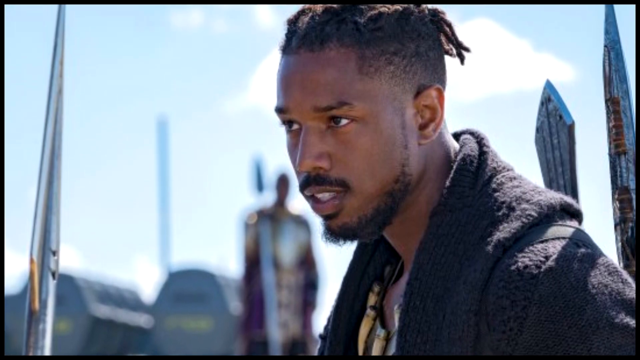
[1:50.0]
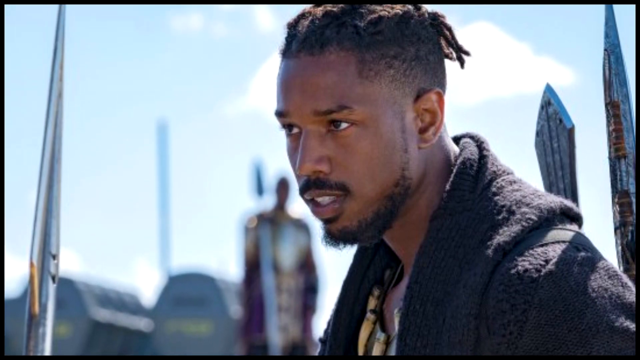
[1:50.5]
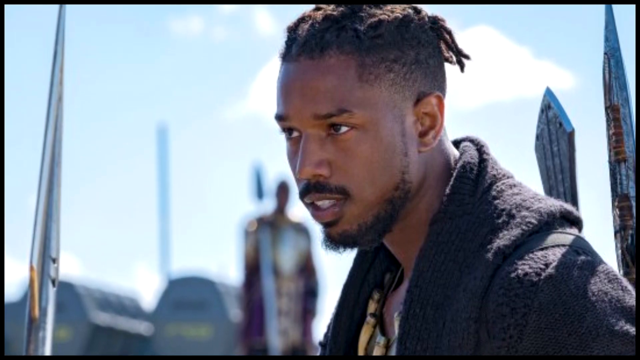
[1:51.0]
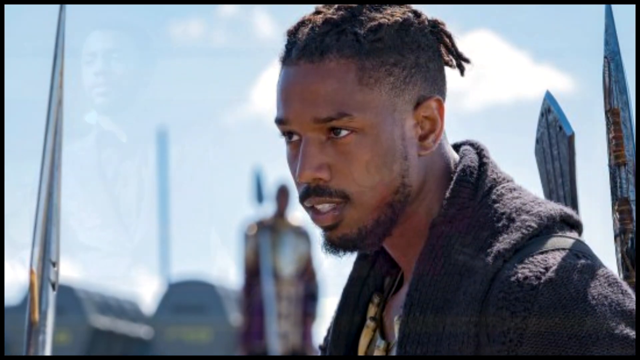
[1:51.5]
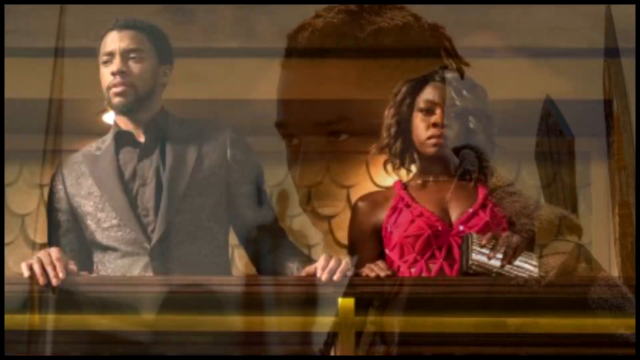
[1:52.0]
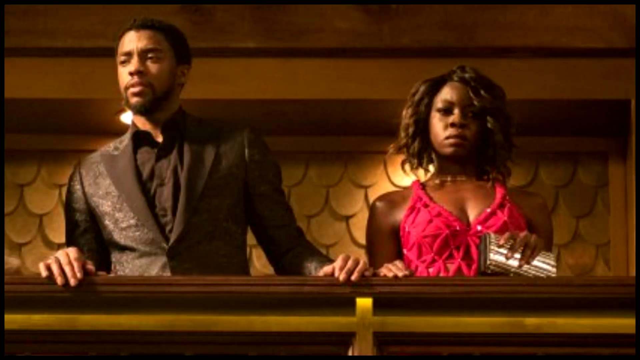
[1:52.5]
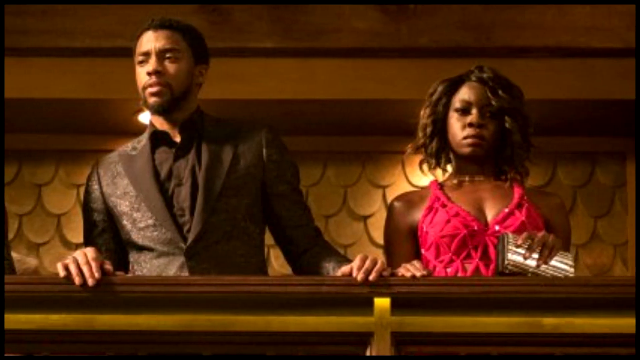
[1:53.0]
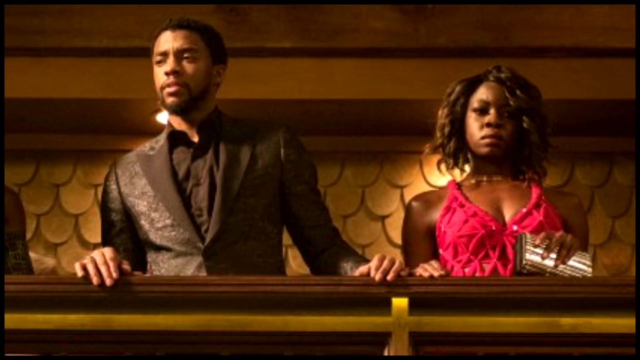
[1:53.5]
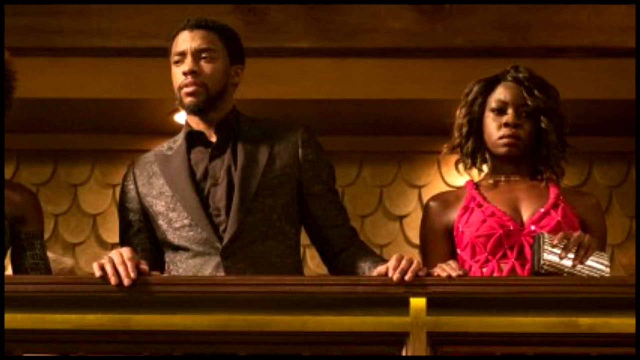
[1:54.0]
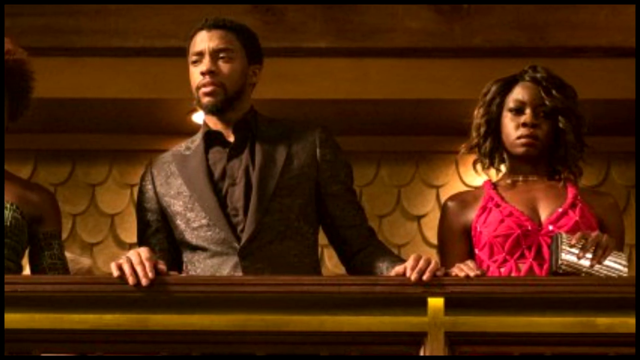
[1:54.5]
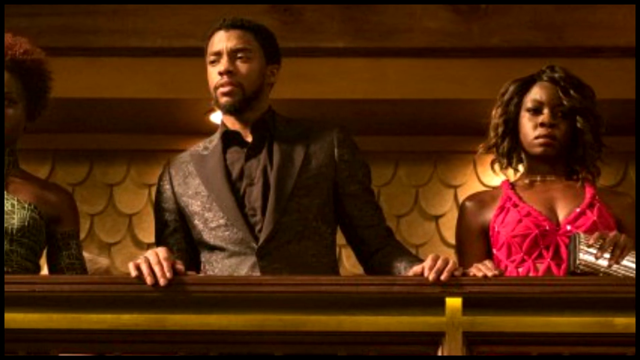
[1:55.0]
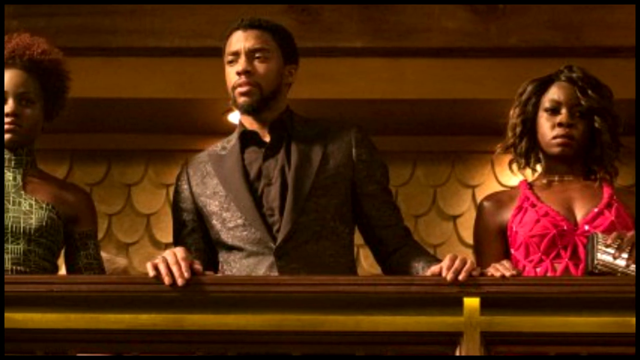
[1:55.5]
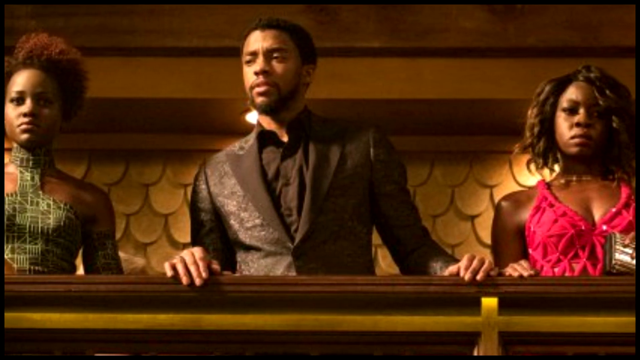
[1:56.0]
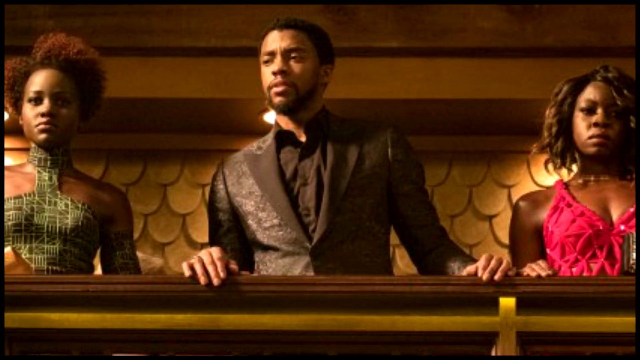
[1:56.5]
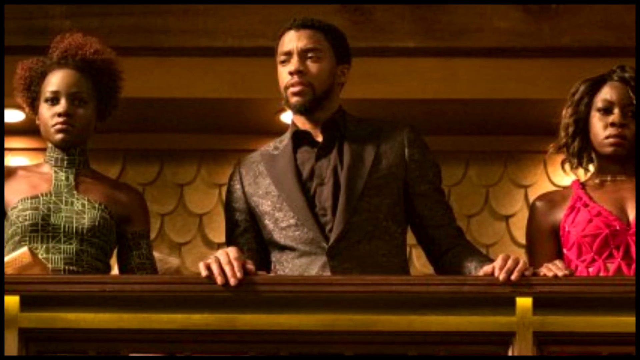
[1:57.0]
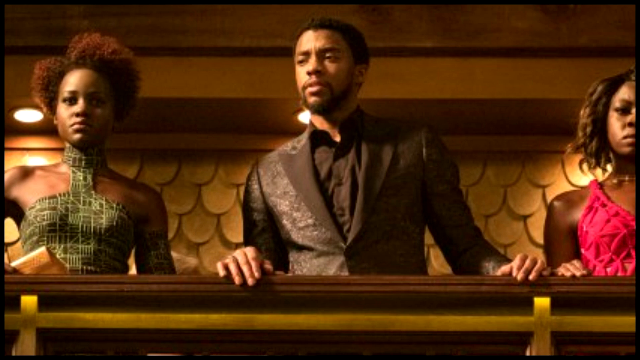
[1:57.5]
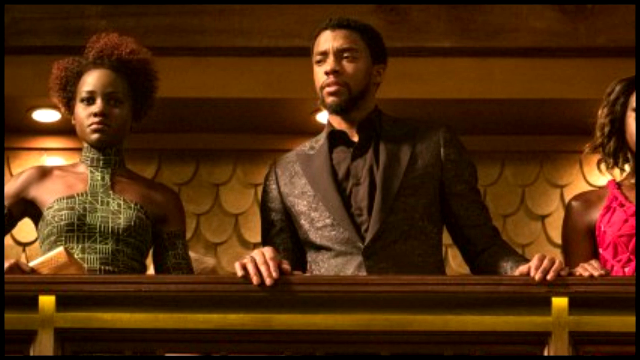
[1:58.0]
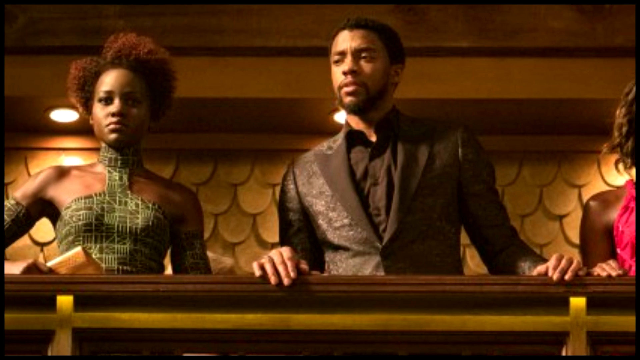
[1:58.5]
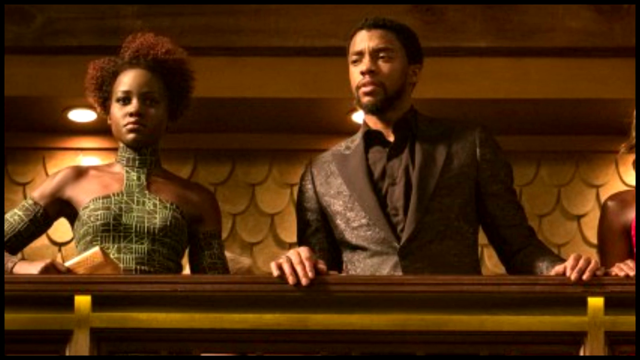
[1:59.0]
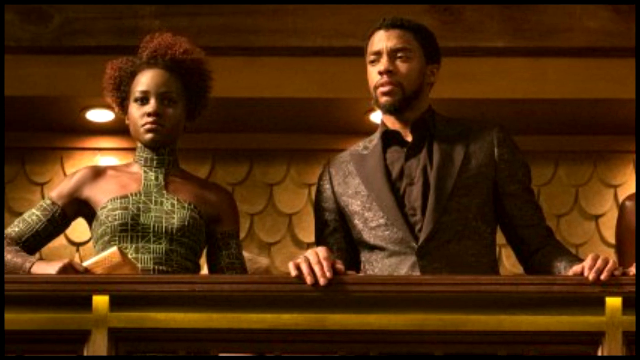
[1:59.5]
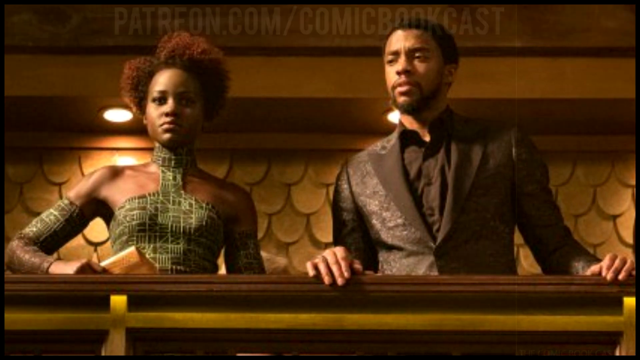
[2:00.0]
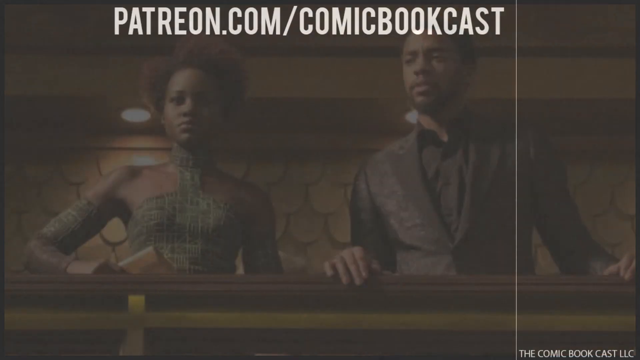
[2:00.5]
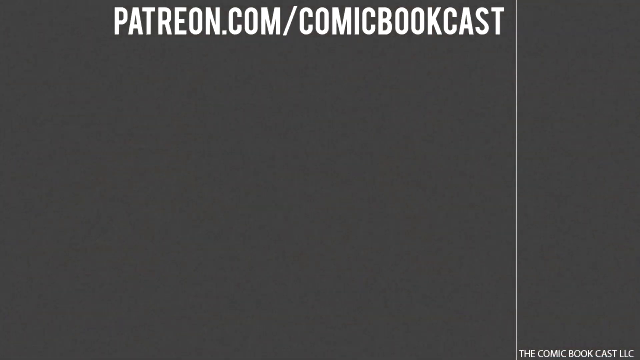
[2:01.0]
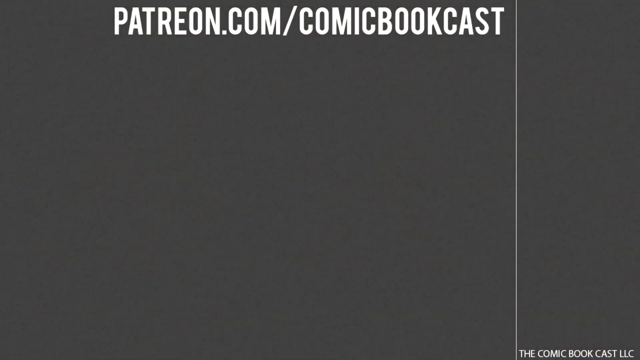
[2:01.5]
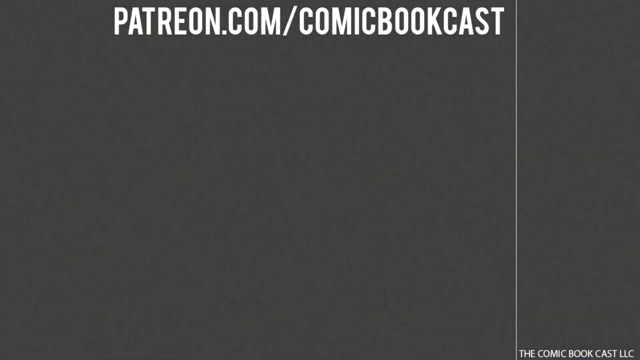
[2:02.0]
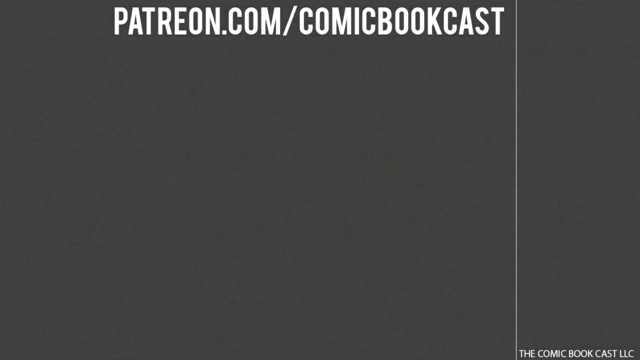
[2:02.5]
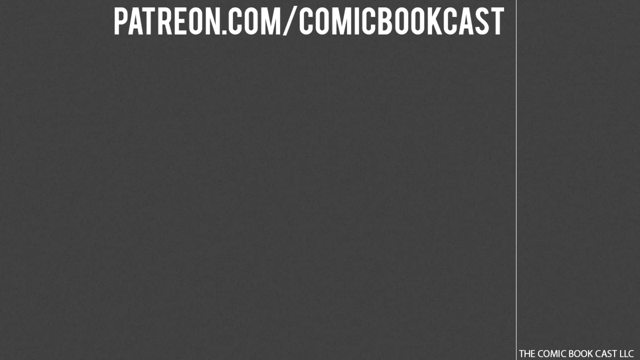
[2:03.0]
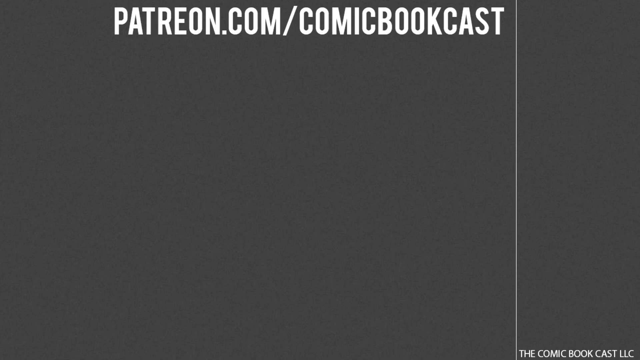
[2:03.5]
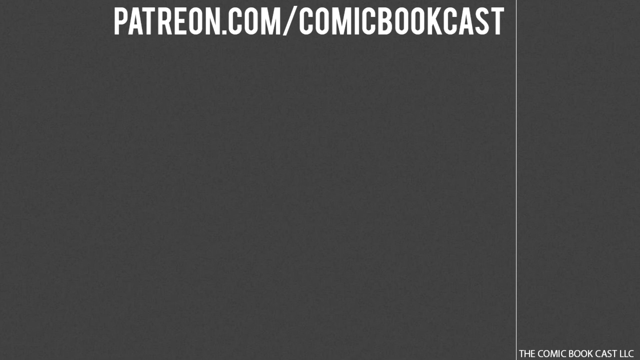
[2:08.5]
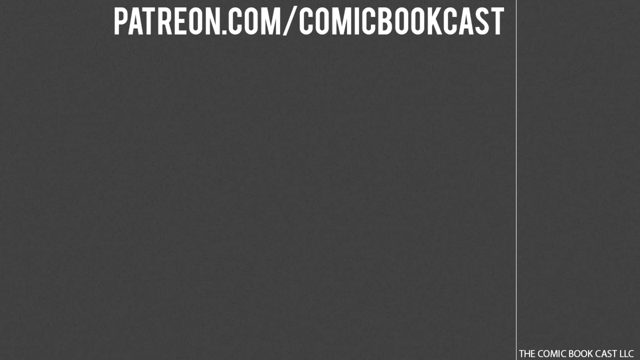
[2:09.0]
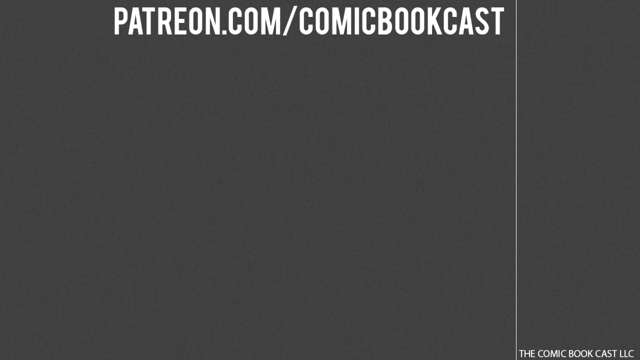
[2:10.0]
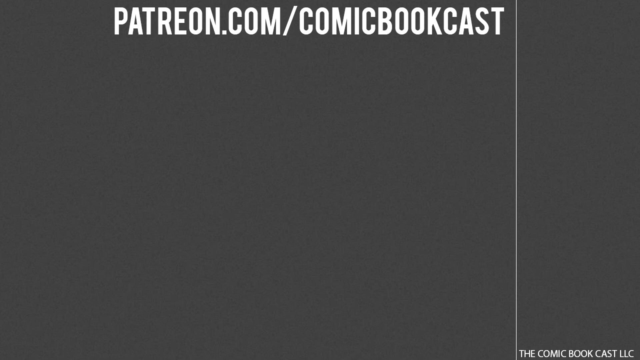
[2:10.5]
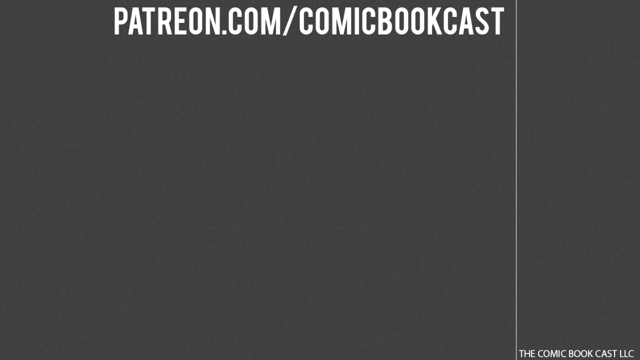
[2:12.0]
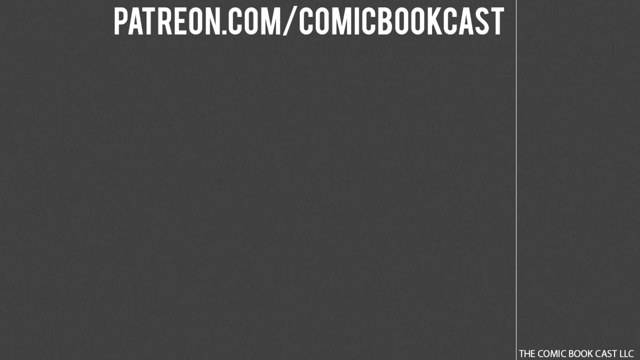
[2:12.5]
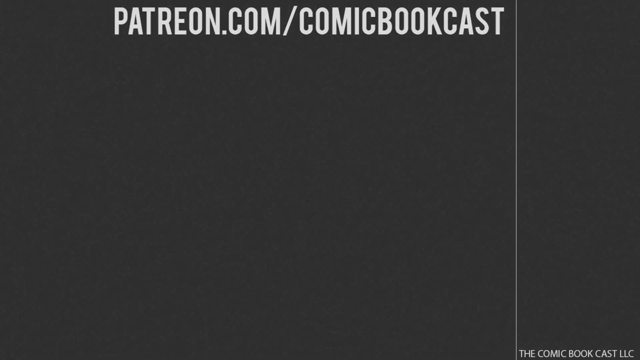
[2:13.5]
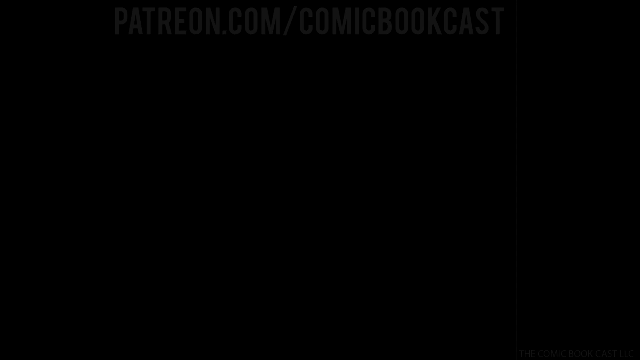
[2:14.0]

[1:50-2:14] Michael B. Jordan appears as Eric Kilmonger in the Marvel movie Black Panther. He wears a hooded, fleece-like jacket and looks to the left of the screen with his lips slightly parted, possibly about to speak. He is a Black man with a black beard that has small braids at the top. He is surrounded by some geometric metal spheres or posts. In the background is a blurred figure. The sky is pale blue with one white cloud. Then an image of several actors and actresses appears as the camera pans to the left. A Black woman in a pink ornate dress grasps a clutch purse in her left hand and stares hard at the camera below. Next to her is apparently Chadwick Boseman in a black suit with a black shirt; the suit has a slight sparkle, and he looks slightly to his left. Then there is a woman in a green dress that attaches around her neck, wearing an arm band. She has short dark hair that sort of sticks up and is slightly parted. Behind them is a gold wall that looks like fish gills, with a light gleaming down, and they are at a banister or on a balcony. Then it flashes to a gray screen with white text reading "patreon.com/comic book cast".